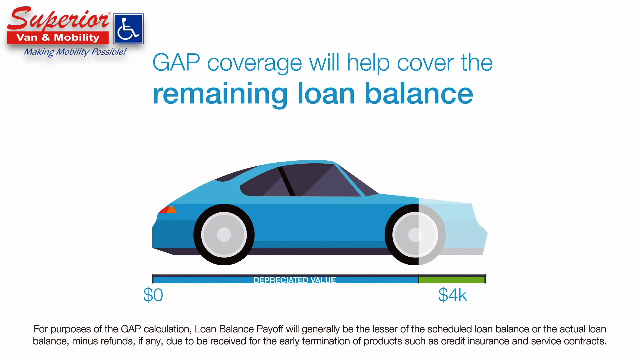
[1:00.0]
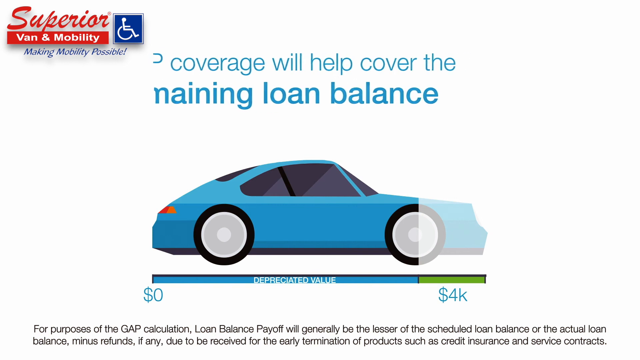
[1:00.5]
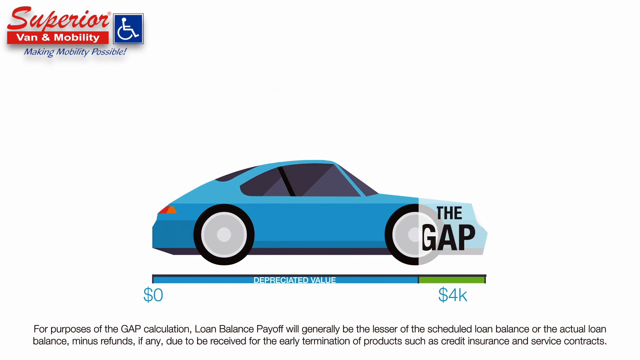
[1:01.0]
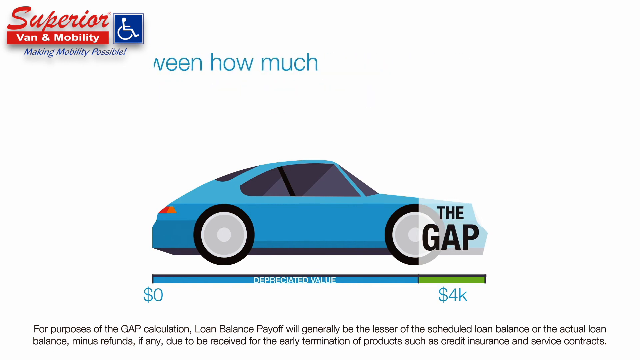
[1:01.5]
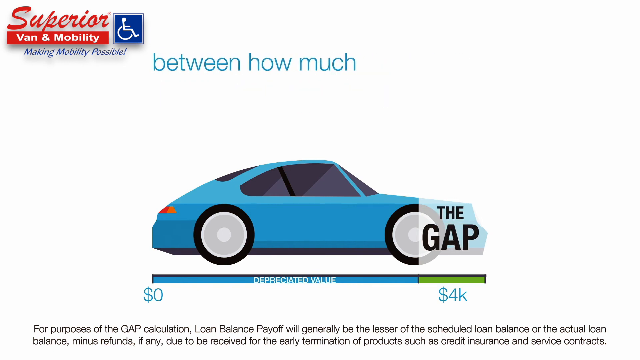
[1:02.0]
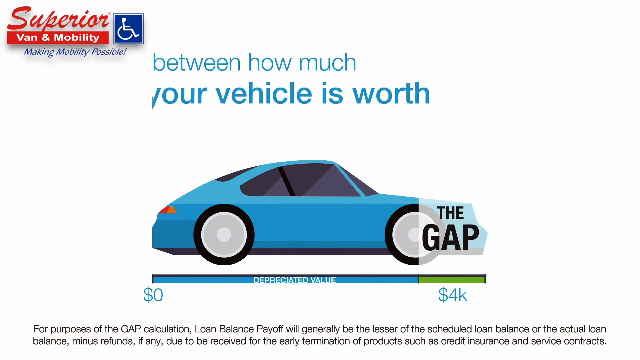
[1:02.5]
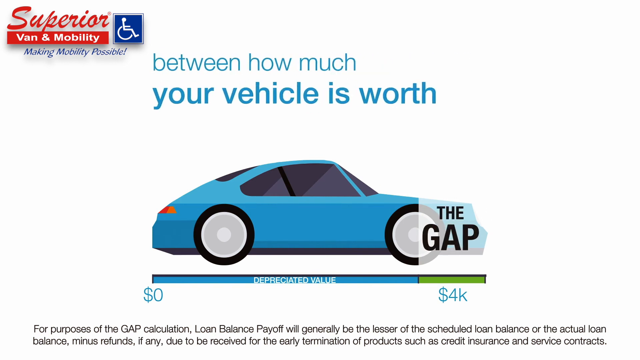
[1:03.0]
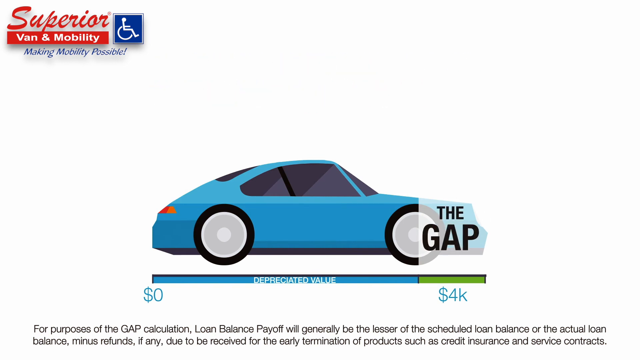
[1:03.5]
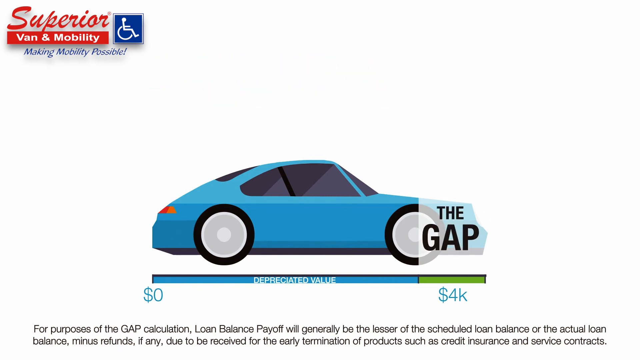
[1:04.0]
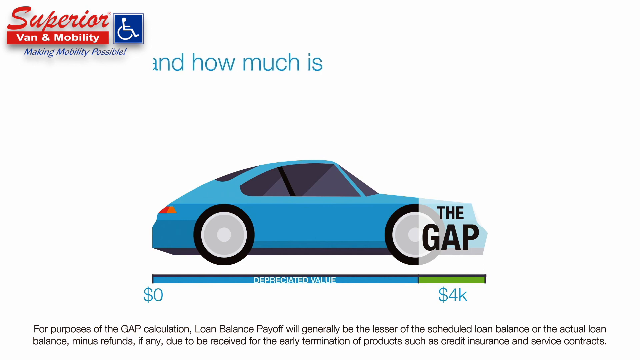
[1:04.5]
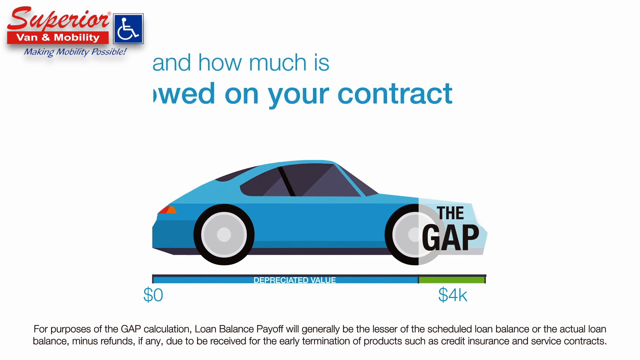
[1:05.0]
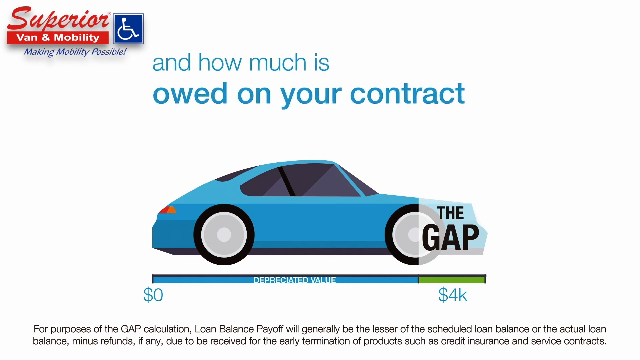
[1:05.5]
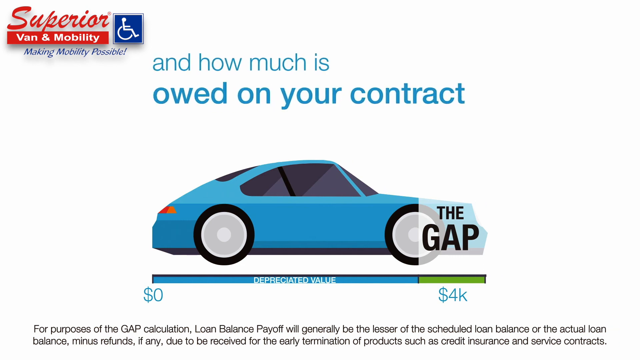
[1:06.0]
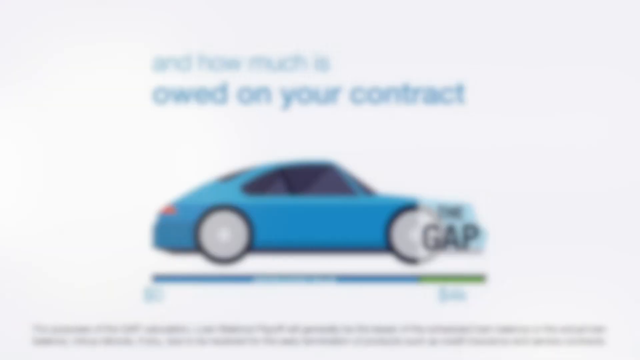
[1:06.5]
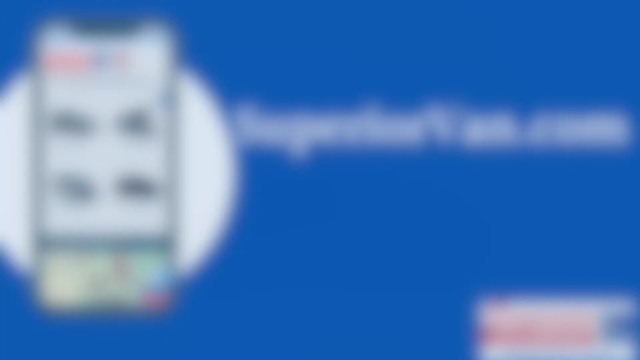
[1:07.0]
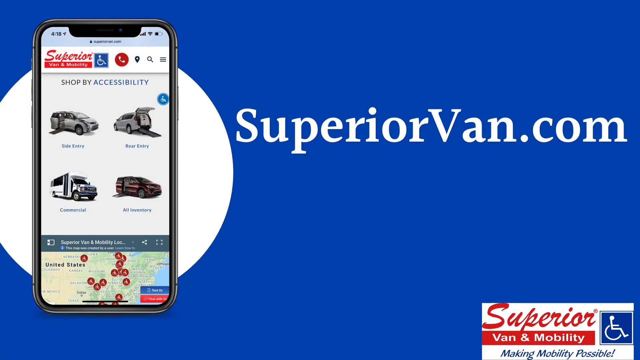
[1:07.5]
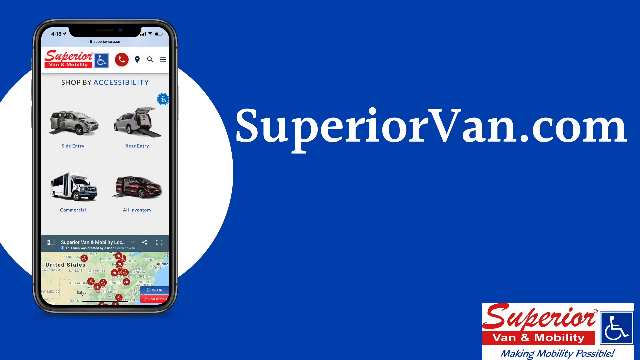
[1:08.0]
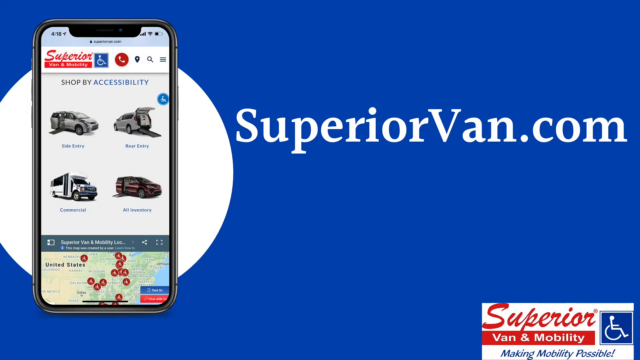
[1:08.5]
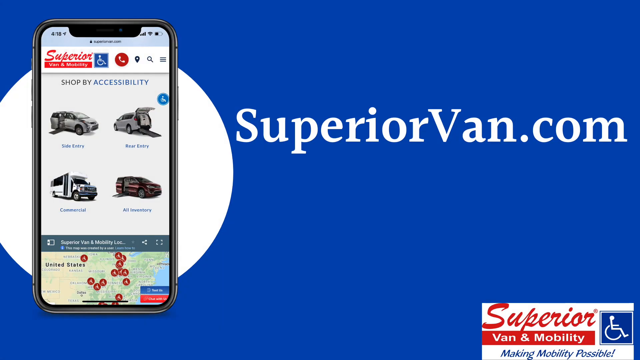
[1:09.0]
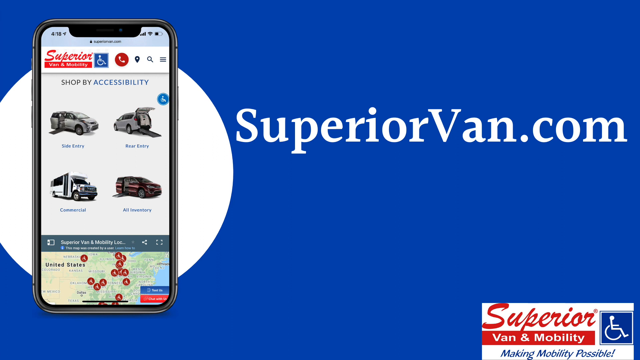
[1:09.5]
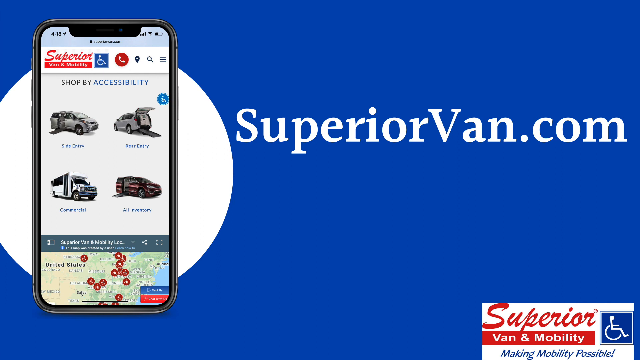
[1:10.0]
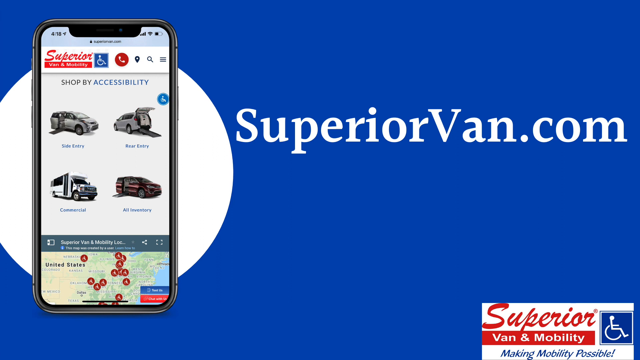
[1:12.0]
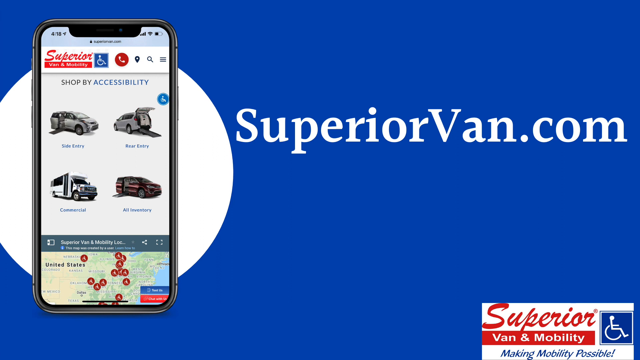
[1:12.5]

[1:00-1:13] The screen swipes to the left. At the bottom right the gap of $4,000 is shown with the text "between how much your vehicle is worth," then the text swipes left and more text comes in: "and how much is owed on your contract," which fades in. On the left a smartphone shows "Superior" and "shop by accessibility," with options including "side entry," "rear entry" and "commercial." At the center "superiorvan.com" appears on a blue background, with "Superior" at the bottom right. It appears that superiorvan.com can be accessed on a smartphone, and there is a map at the bottom.